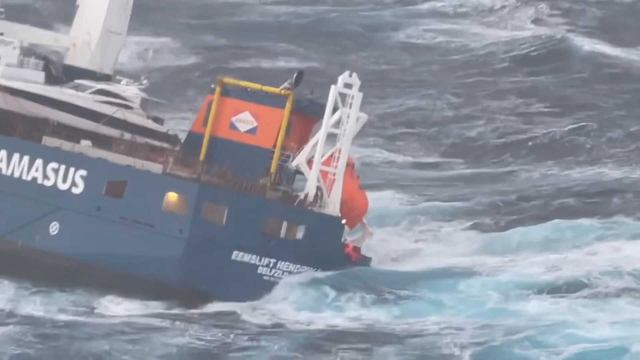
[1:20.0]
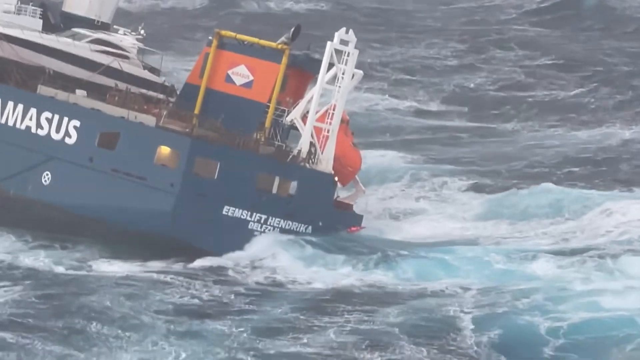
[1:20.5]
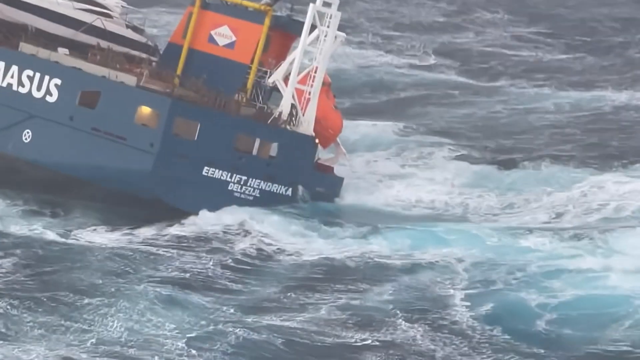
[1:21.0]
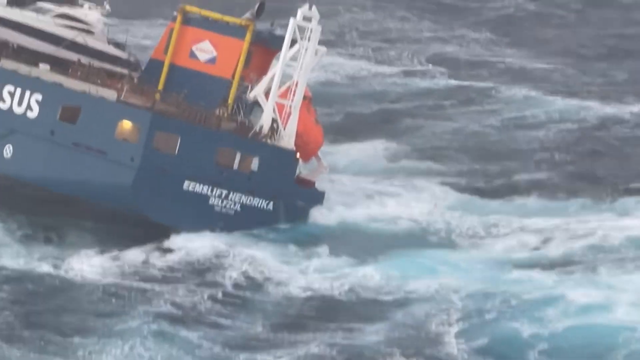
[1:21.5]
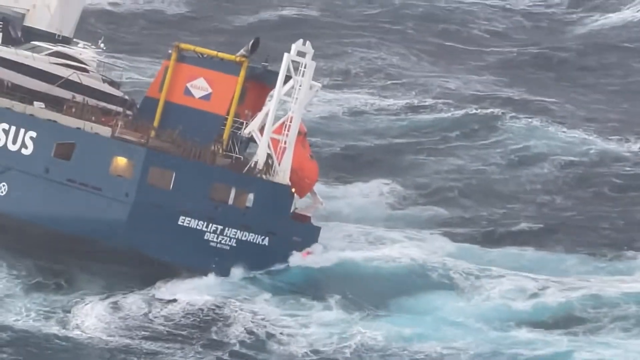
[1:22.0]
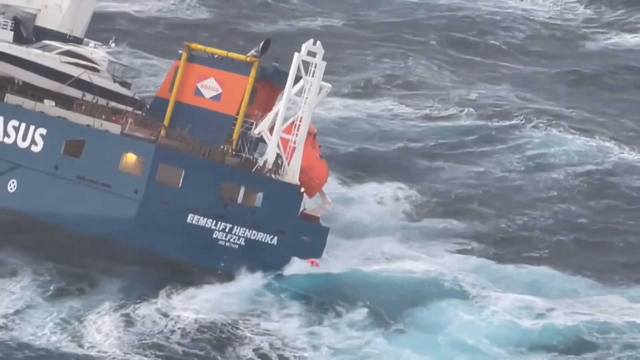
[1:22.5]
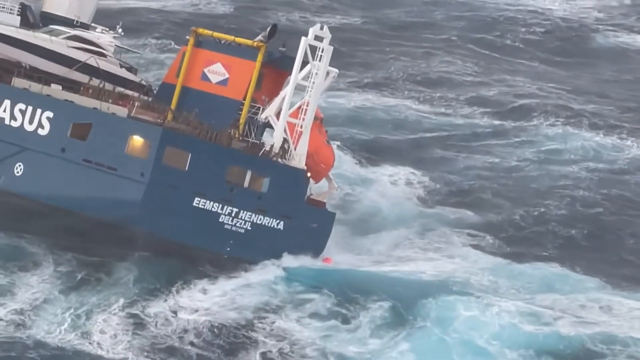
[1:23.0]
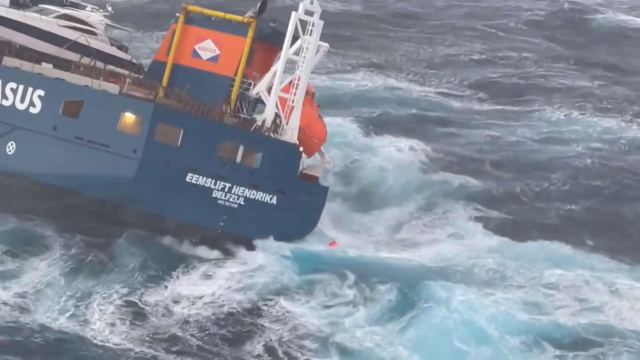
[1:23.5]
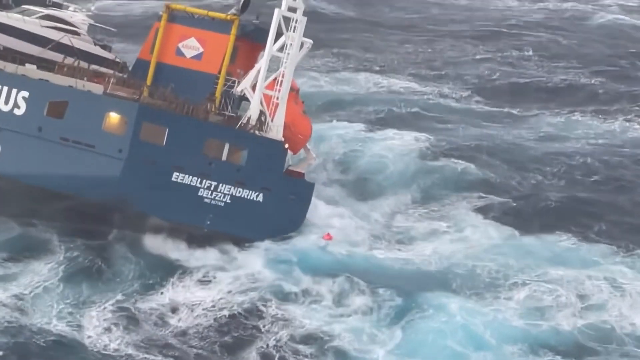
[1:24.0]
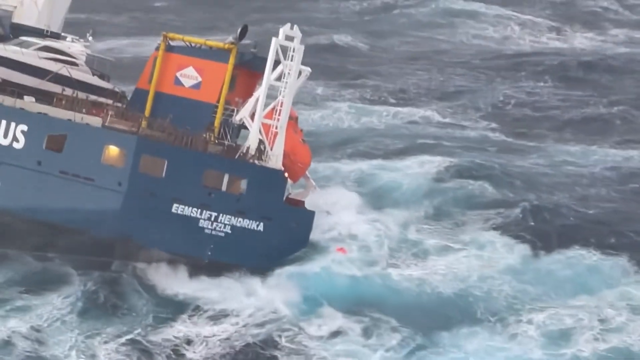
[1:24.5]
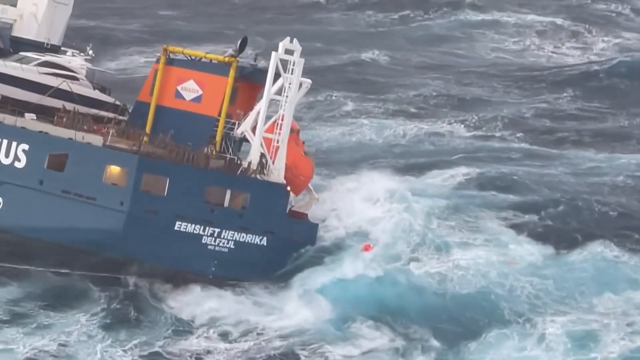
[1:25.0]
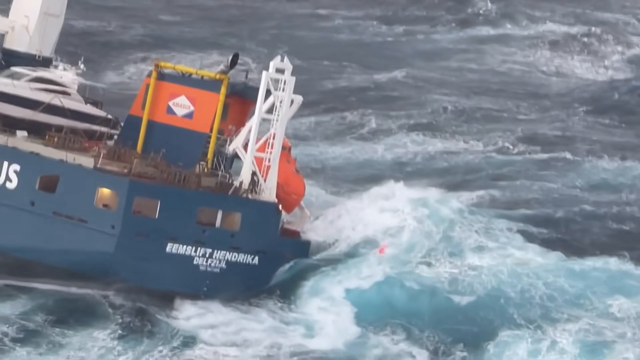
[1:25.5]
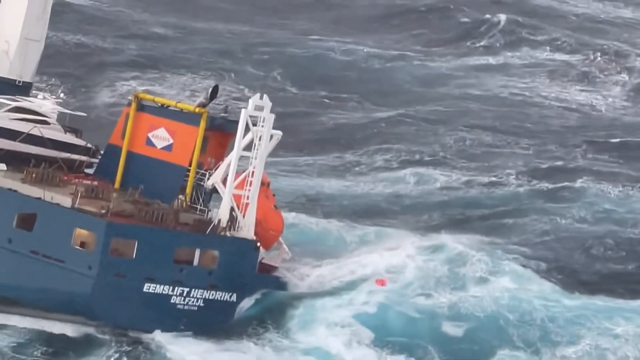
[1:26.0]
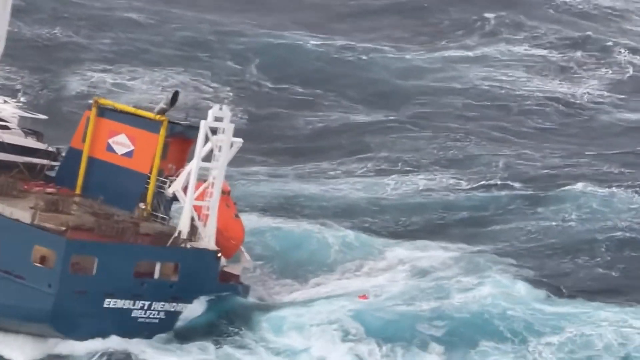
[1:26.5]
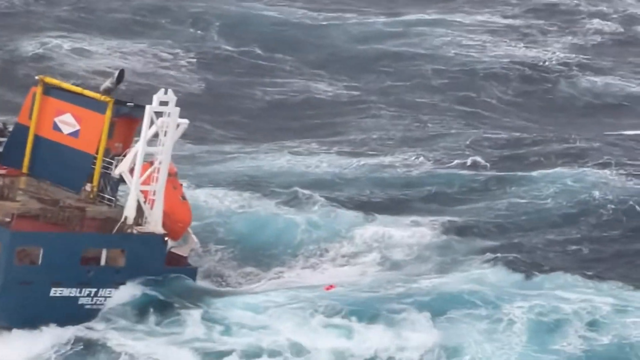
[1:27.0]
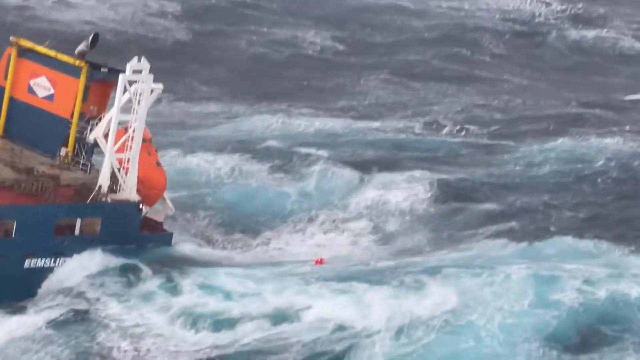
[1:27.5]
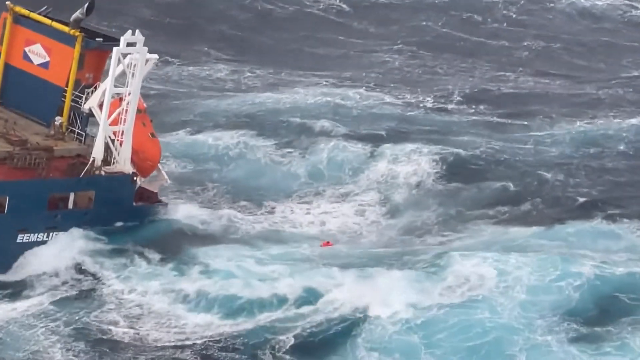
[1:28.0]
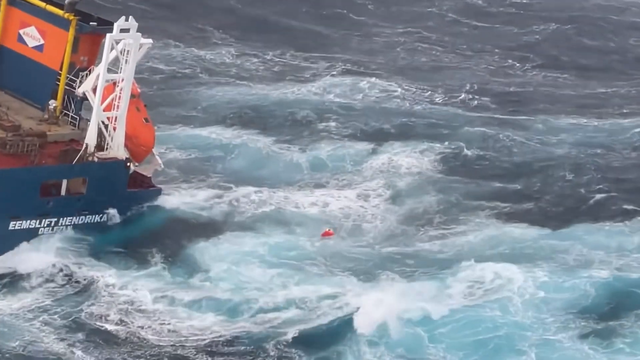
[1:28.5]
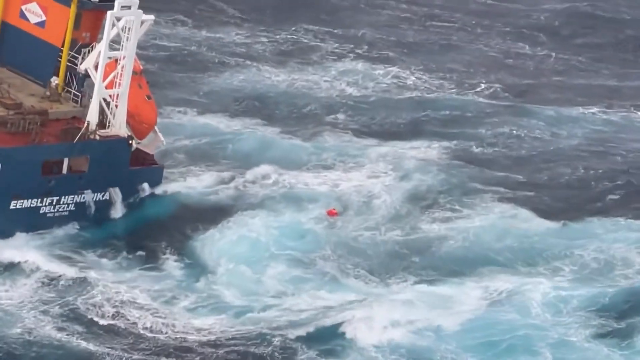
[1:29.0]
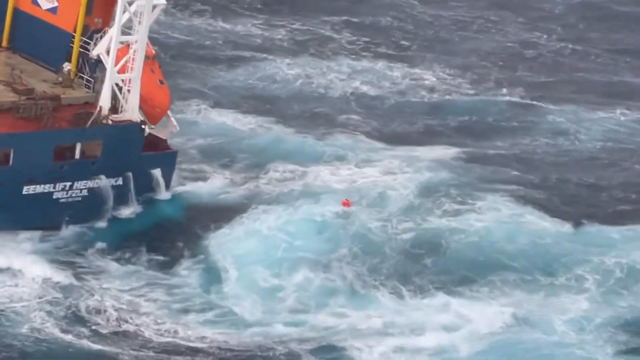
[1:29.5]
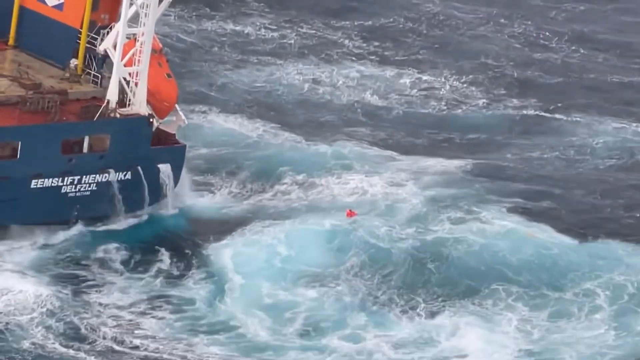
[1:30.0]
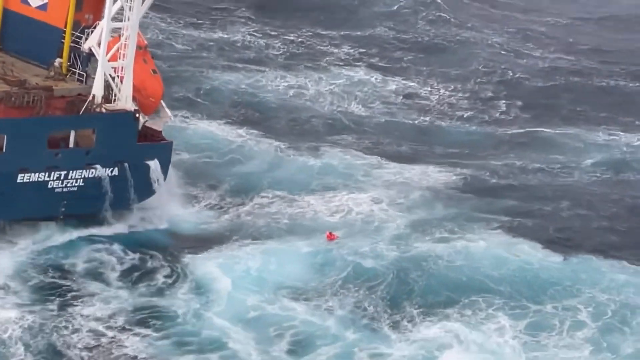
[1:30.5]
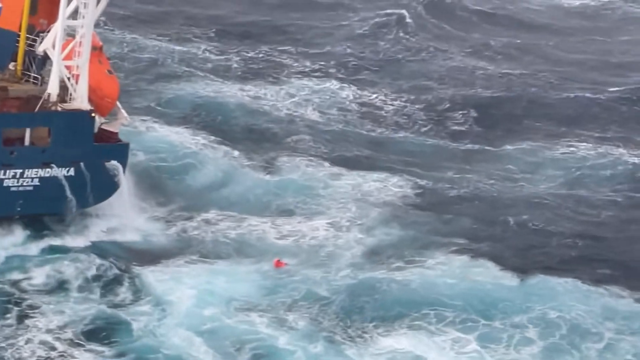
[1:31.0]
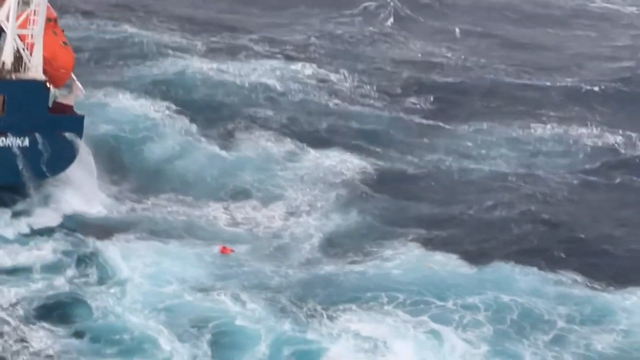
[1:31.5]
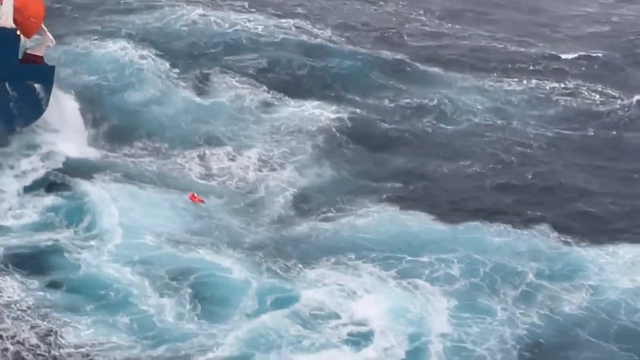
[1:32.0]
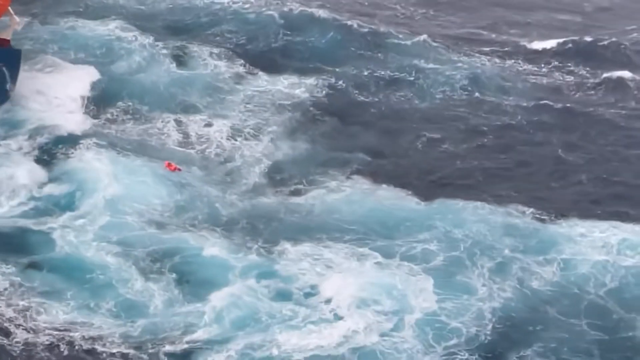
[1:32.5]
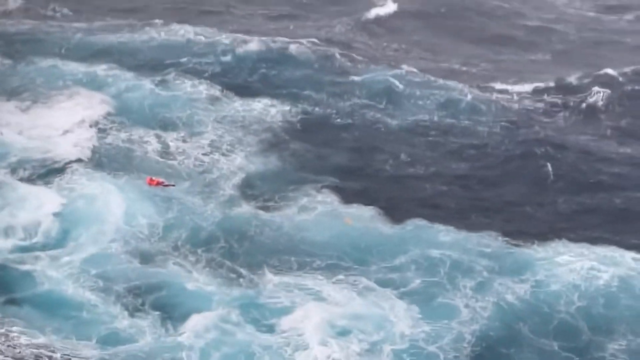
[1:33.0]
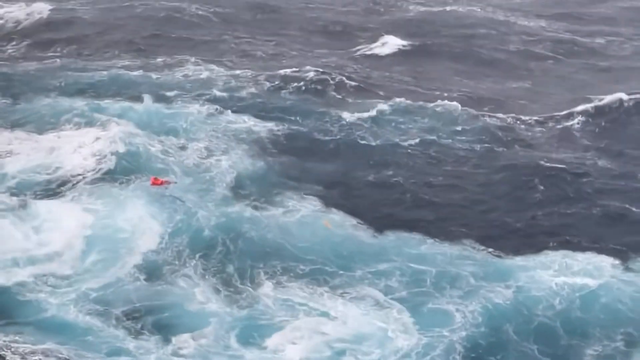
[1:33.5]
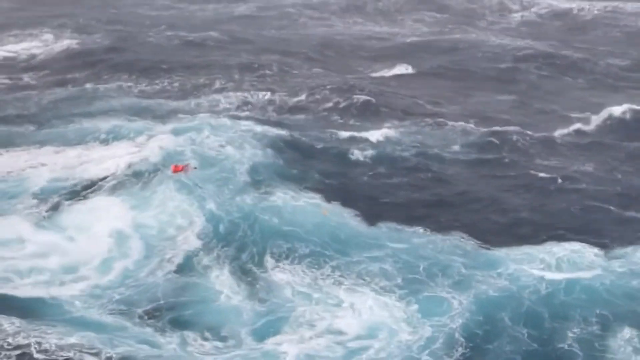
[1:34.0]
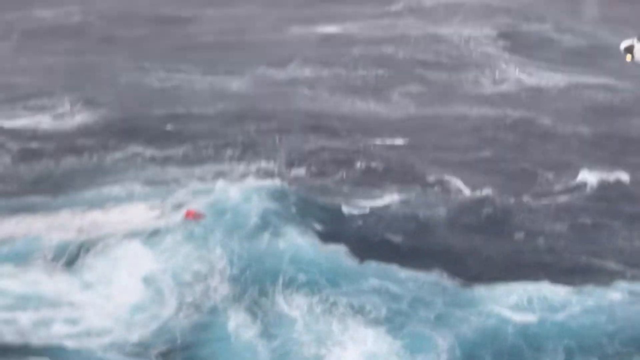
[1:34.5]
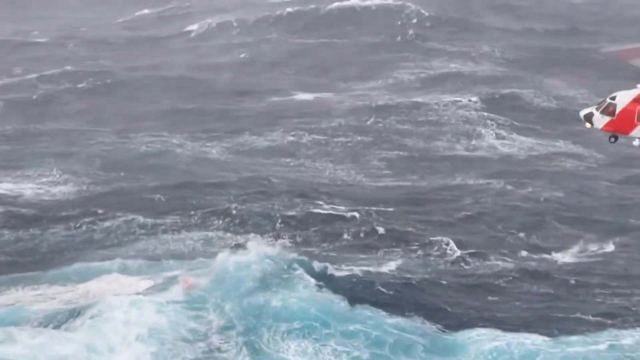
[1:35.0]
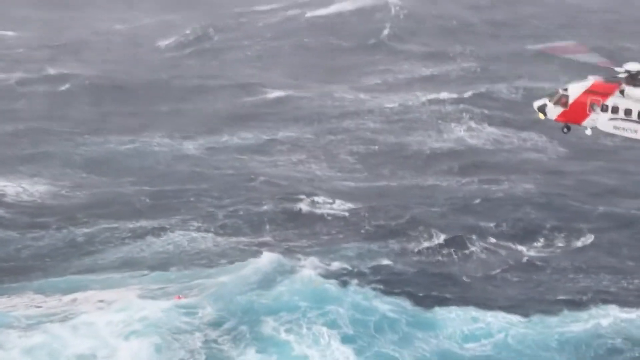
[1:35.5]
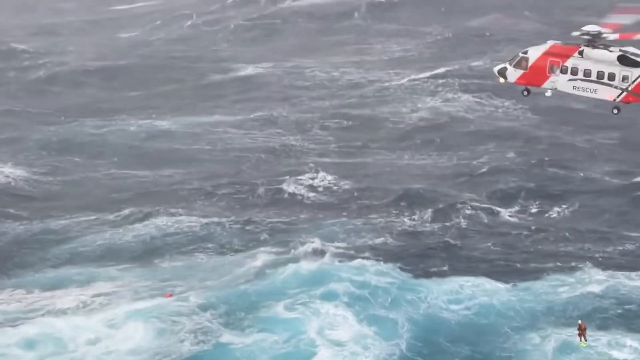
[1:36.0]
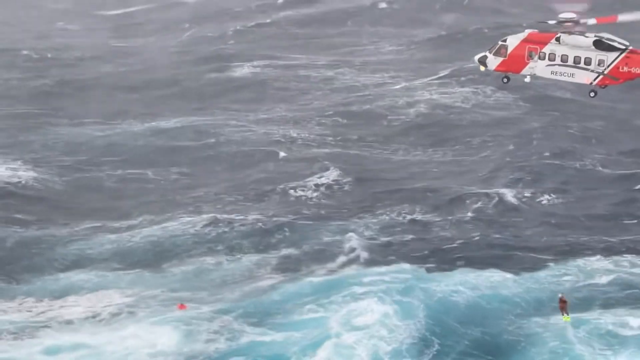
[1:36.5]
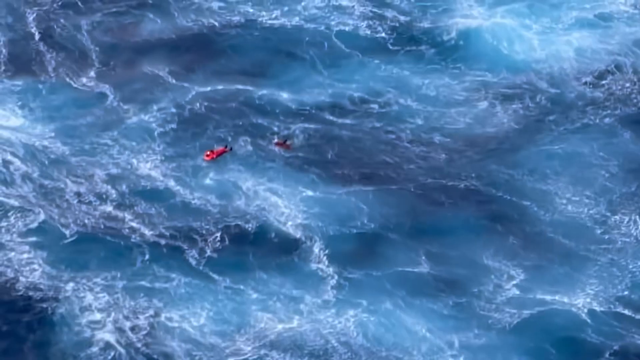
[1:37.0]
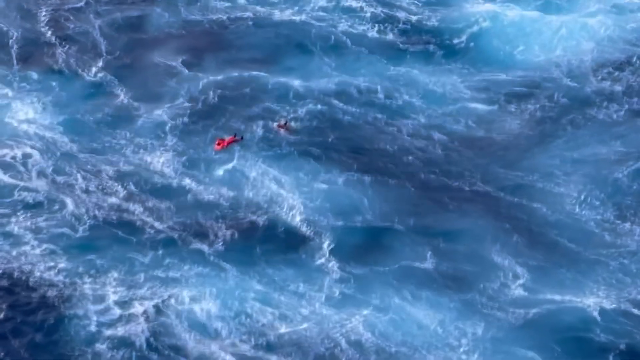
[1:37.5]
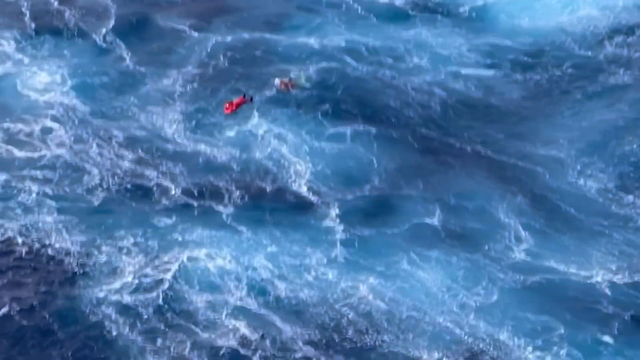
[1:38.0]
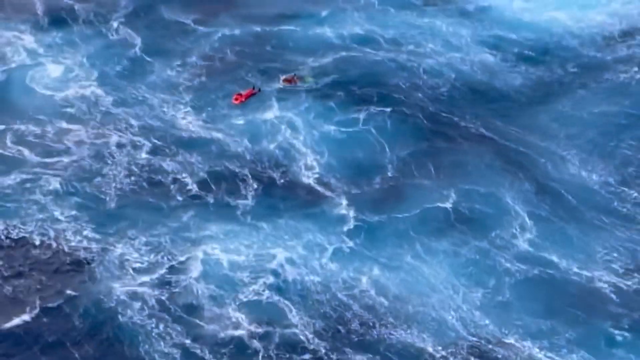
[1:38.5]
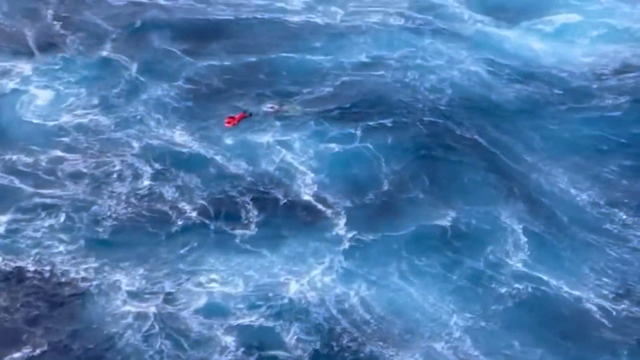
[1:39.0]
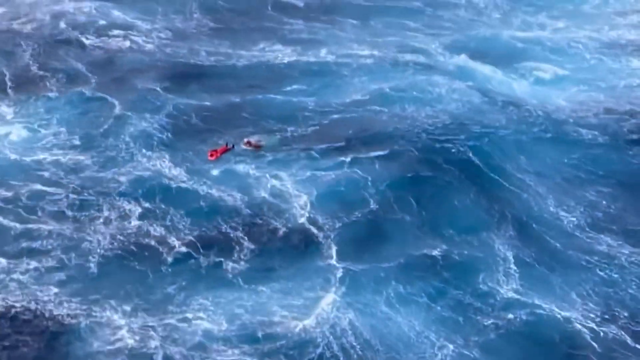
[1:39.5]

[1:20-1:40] A person jumps out of the back of the vessel wearing a sort of hot pink life jacket and floats on the sea surface. The helicopter approaches this person with another person hanging from its rope, who wears somewhat bright green flippers. Toward the end, the person from the helicopter lands on the sea surface and swims toward the person in the life jacket, who is about to be picked up.